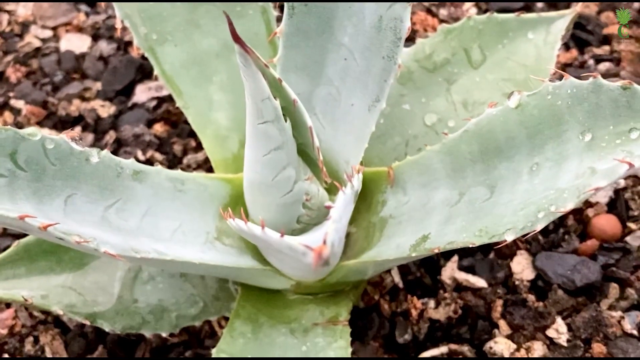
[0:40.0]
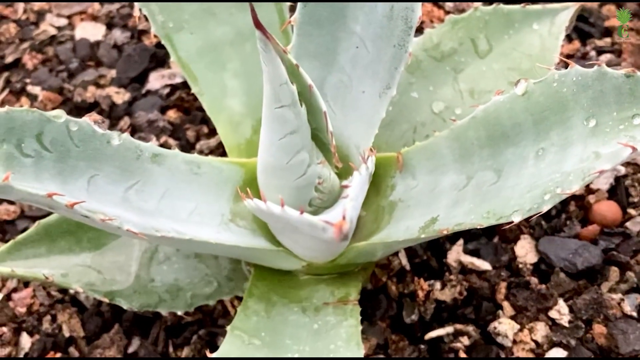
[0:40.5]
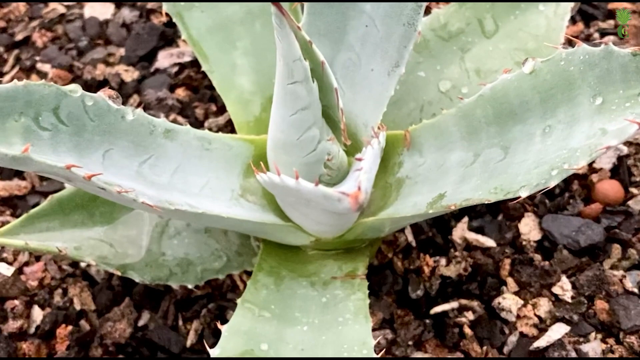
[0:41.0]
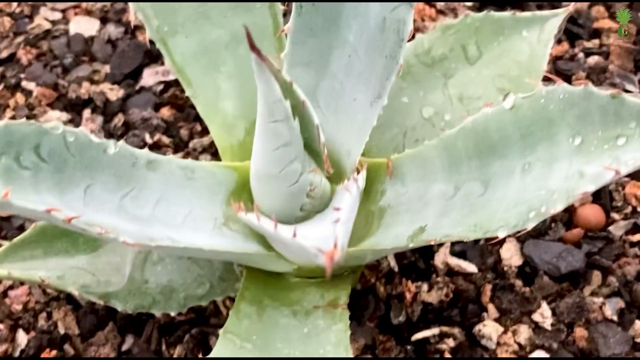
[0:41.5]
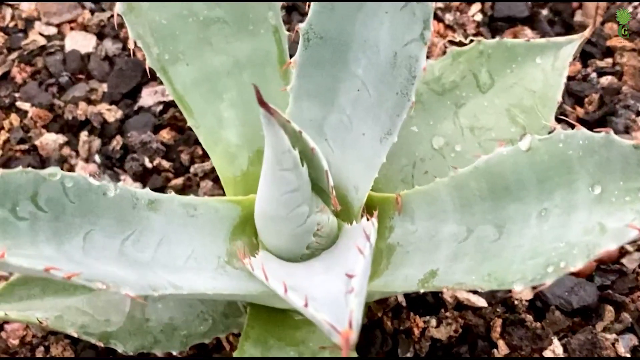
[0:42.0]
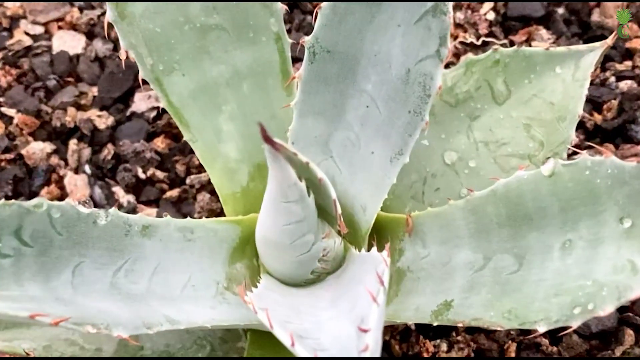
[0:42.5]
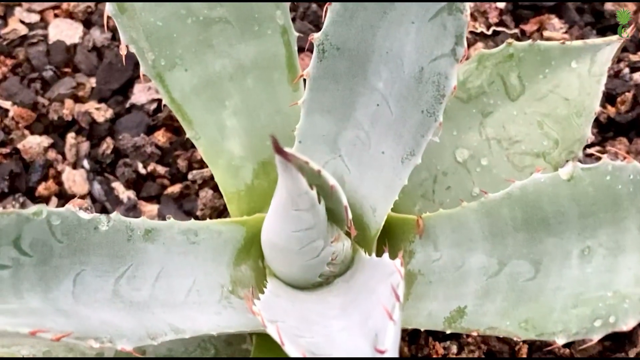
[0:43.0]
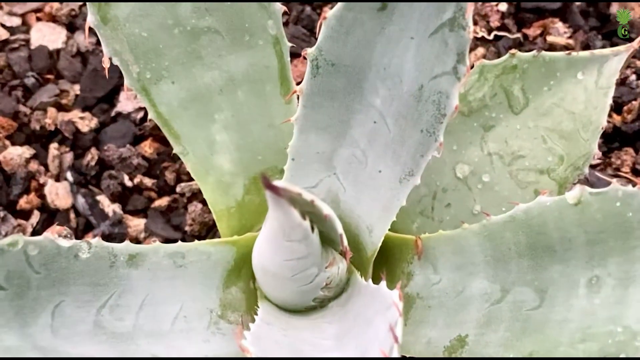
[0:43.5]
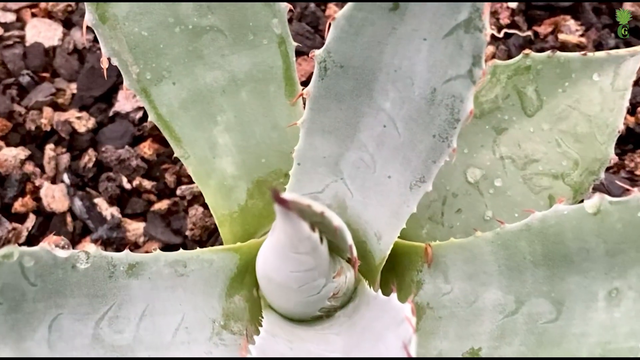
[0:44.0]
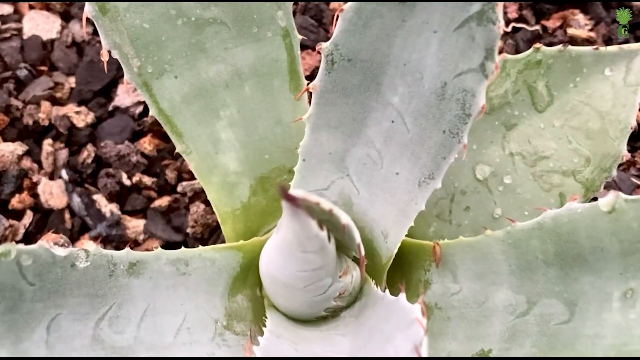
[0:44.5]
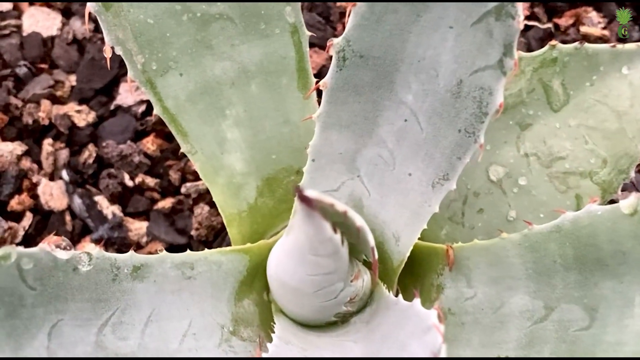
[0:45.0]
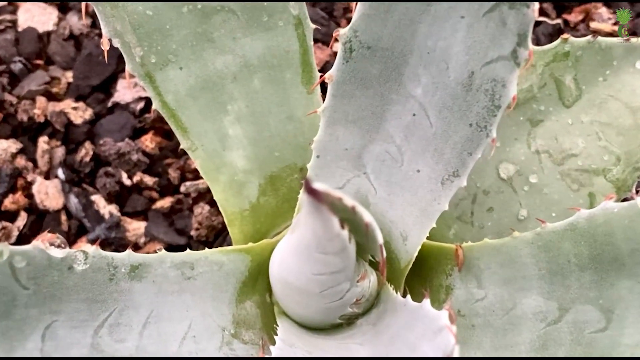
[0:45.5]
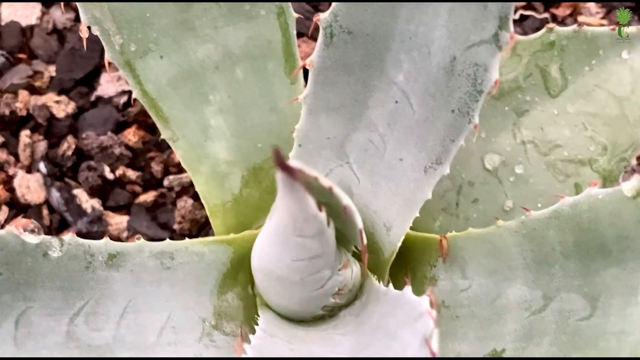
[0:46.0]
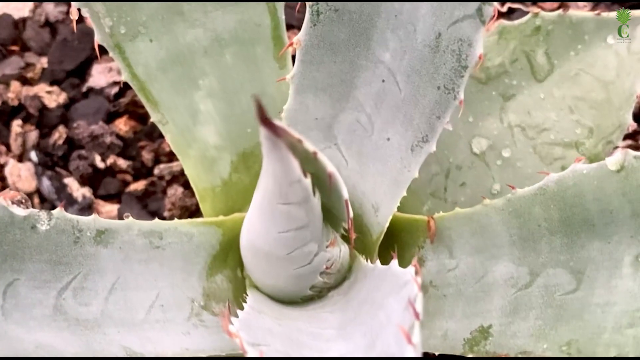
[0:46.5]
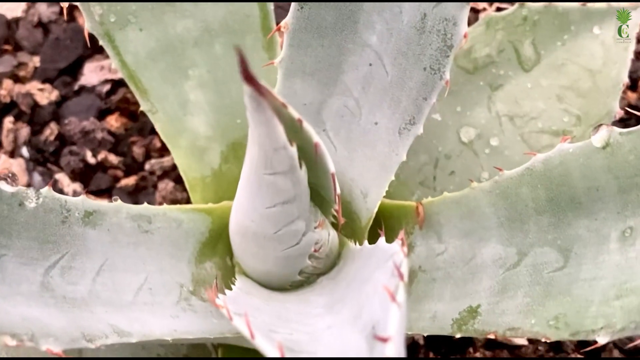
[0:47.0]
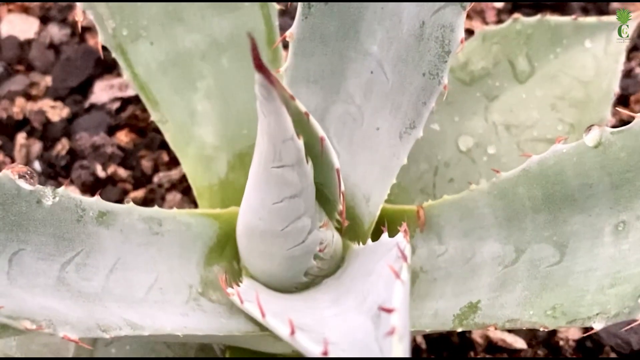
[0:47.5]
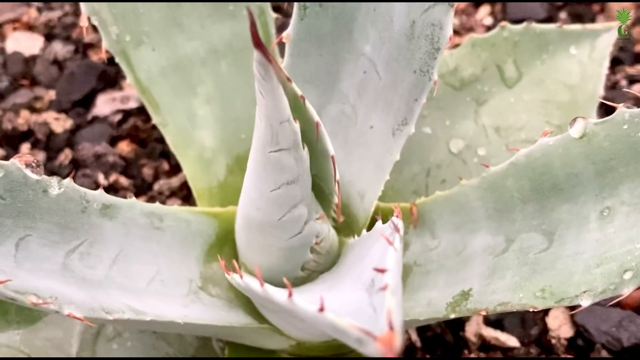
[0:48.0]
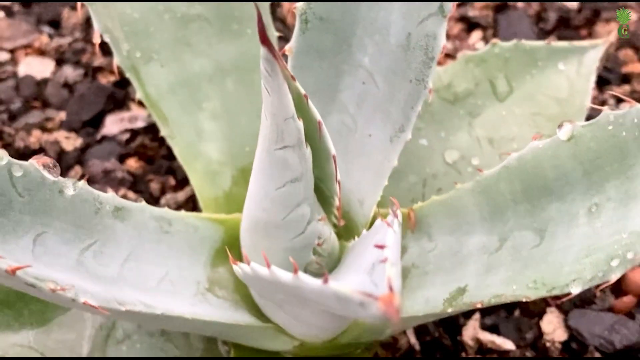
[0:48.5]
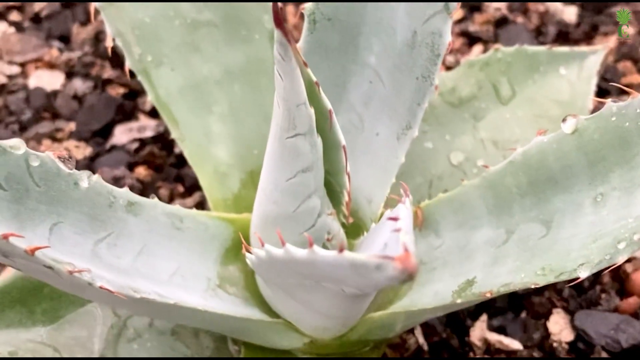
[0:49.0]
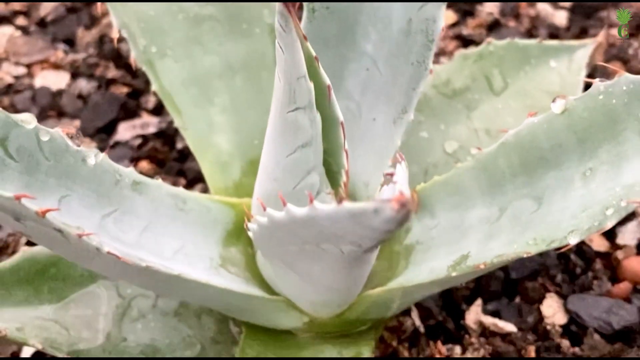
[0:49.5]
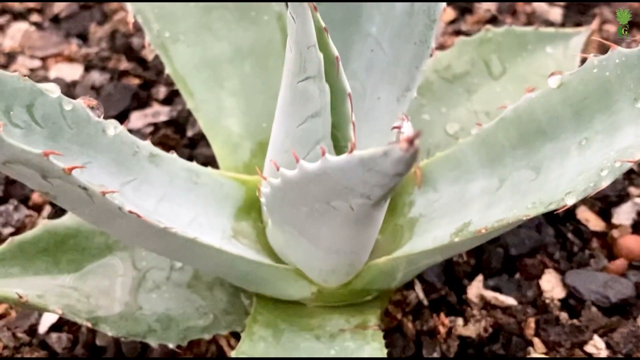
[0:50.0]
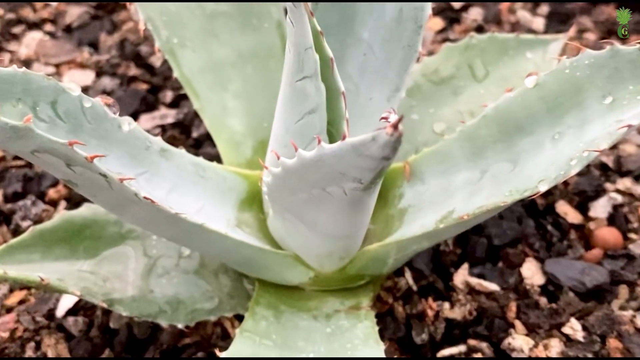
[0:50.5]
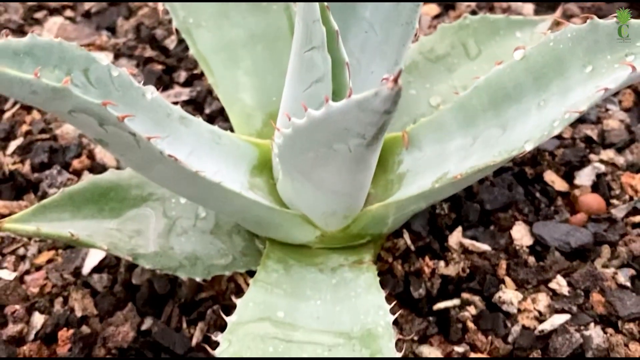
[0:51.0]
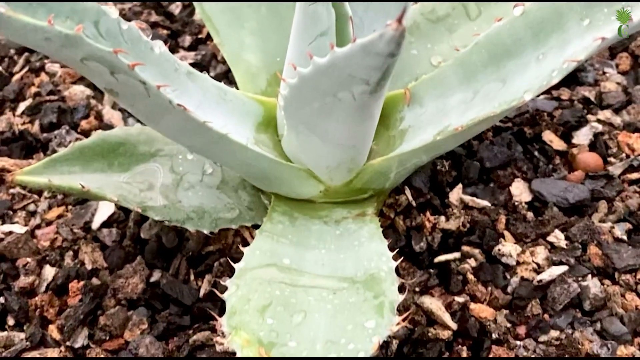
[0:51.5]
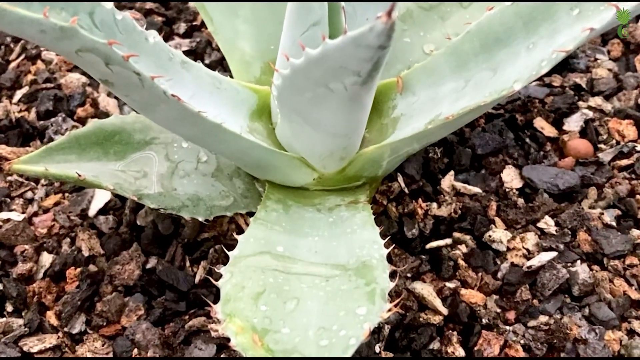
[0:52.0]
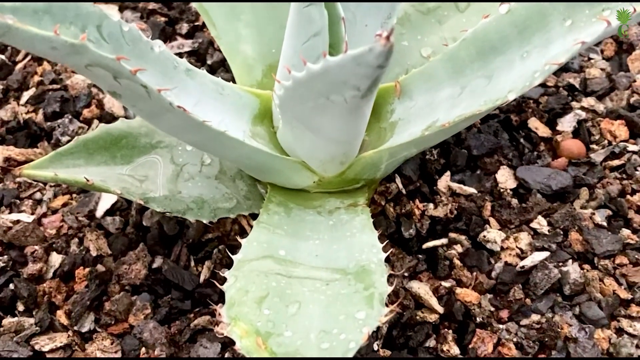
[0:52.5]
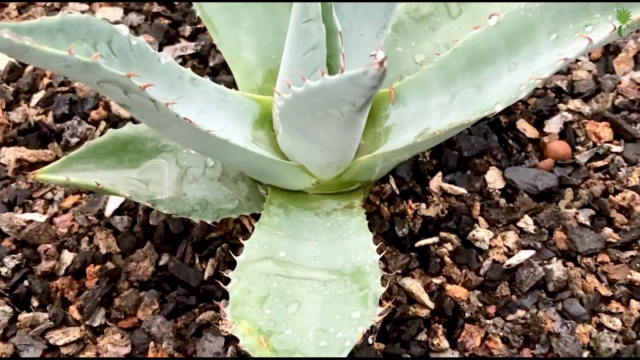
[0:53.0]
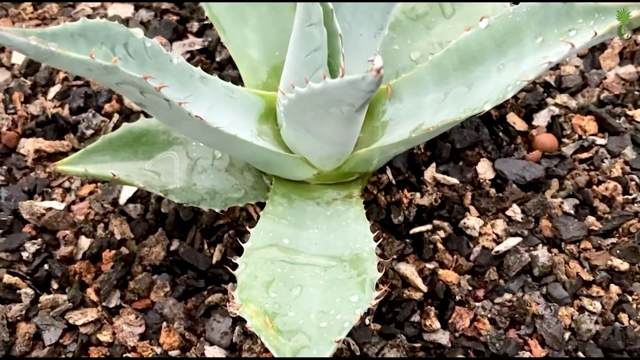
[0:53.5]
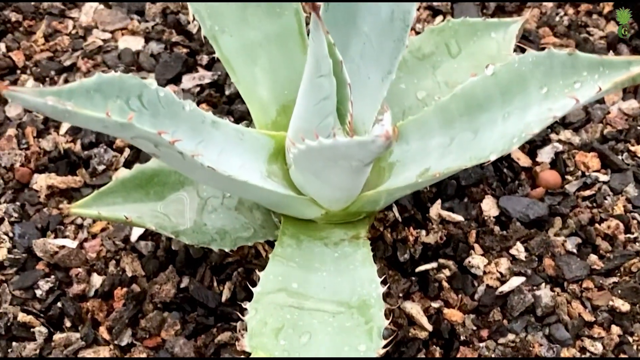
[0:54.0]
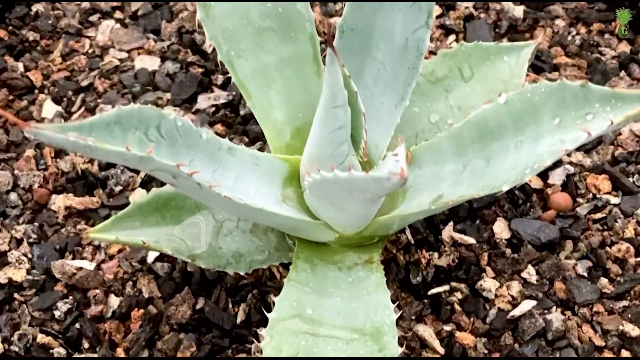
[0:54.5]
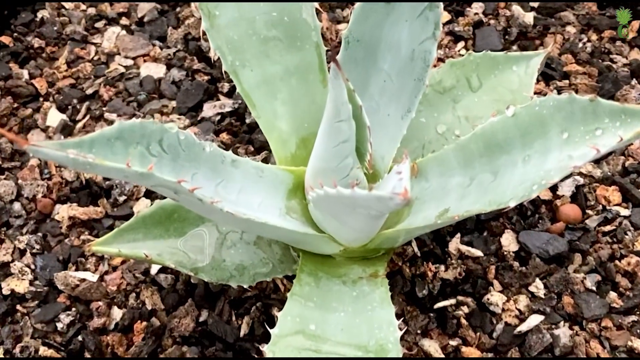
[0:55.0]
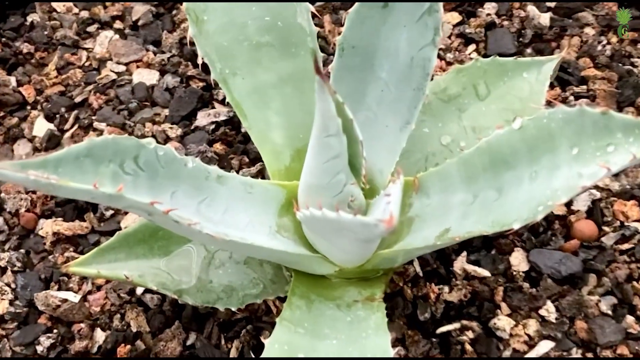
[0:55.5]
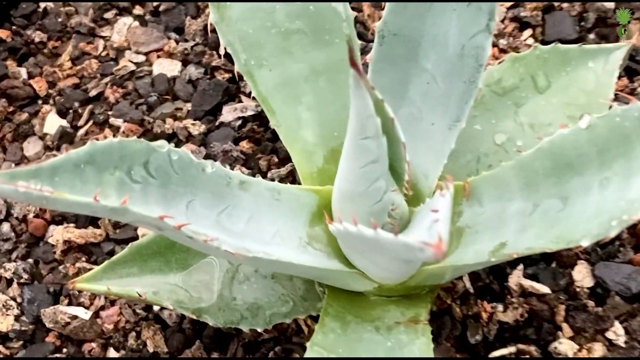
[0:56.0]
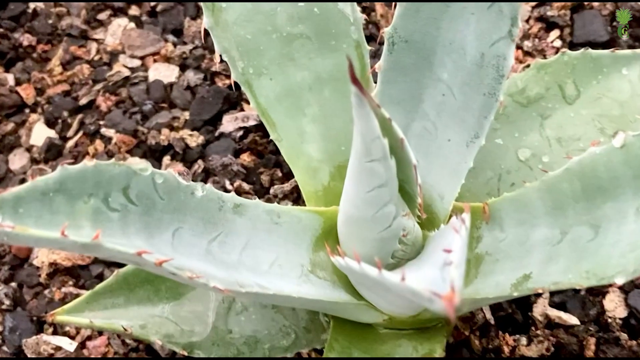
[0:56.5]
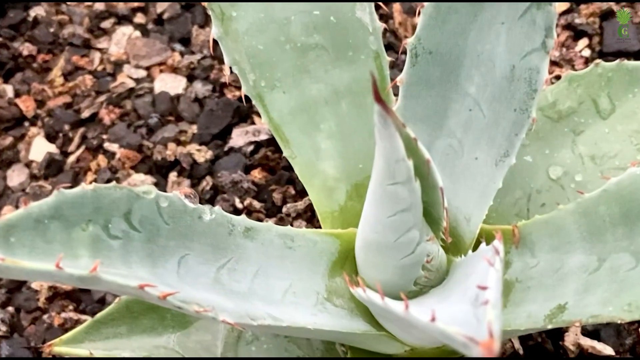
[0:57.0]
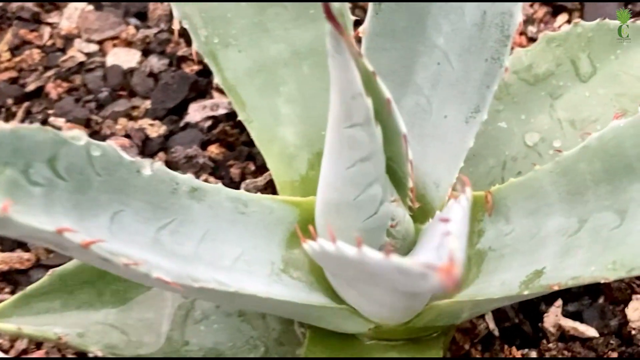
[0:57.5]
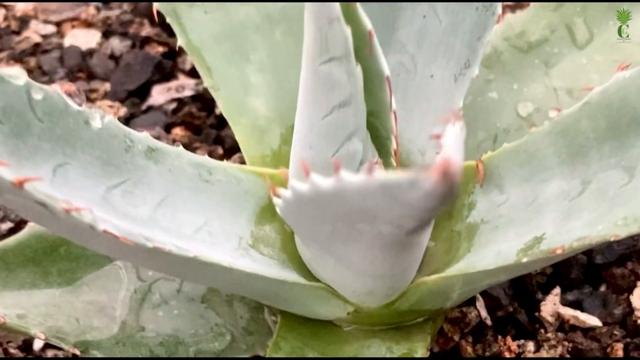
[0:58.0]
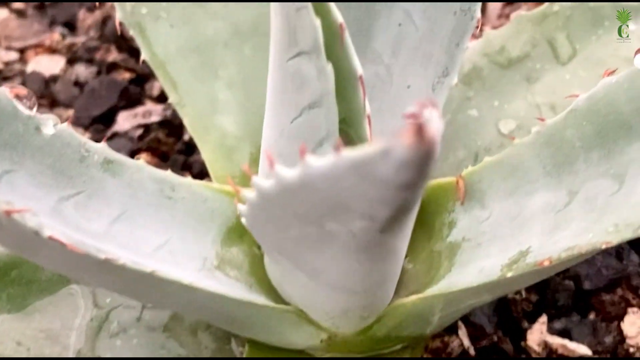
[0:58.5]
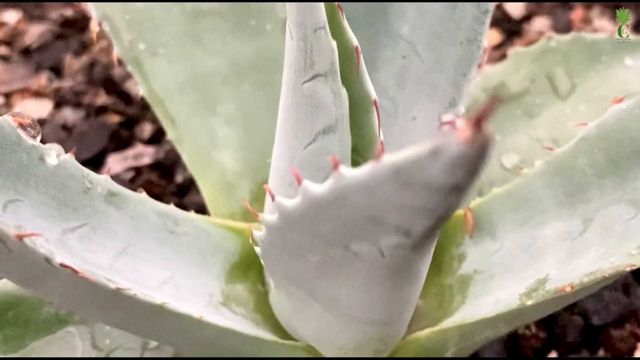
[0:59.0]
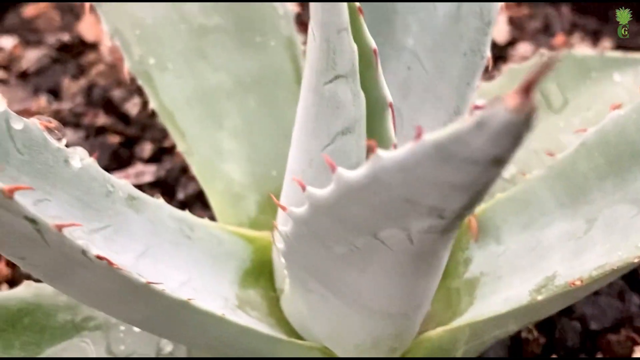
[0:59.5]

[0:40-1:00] The camera is still zooming in on the succulent. Quite a few droplets of water are caught on the leaves and seem to be running down to the centre of the plant. Some of the leaves seem to be a light sage green with almost a whitish sheen on them, while the leaves towards the centre of the plant seem to be a brighter green.